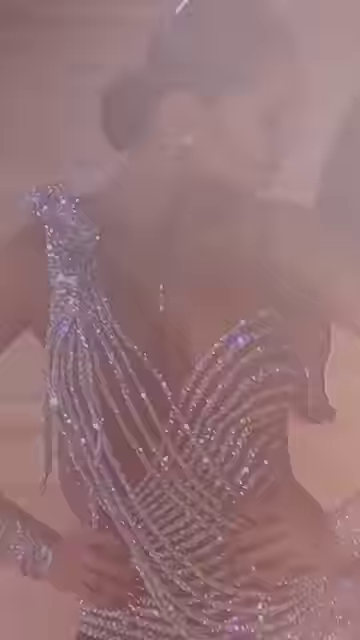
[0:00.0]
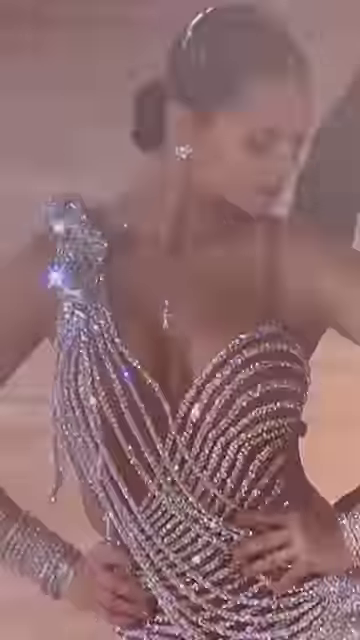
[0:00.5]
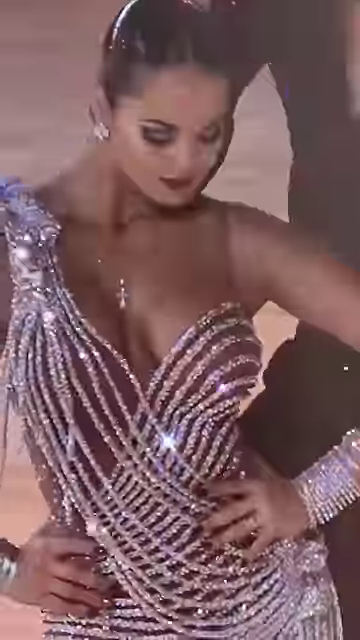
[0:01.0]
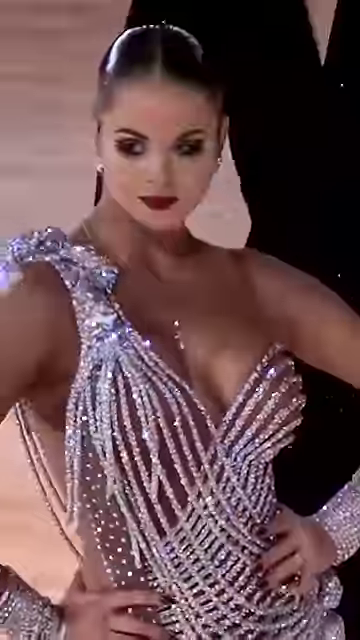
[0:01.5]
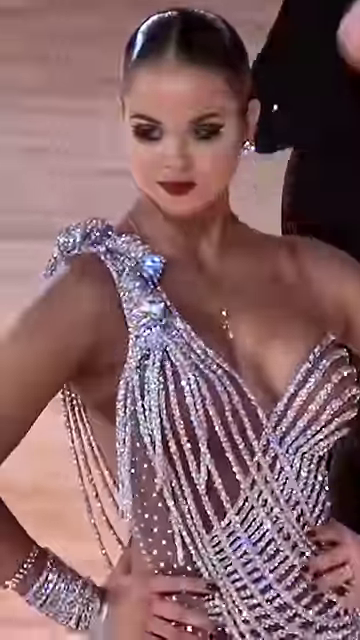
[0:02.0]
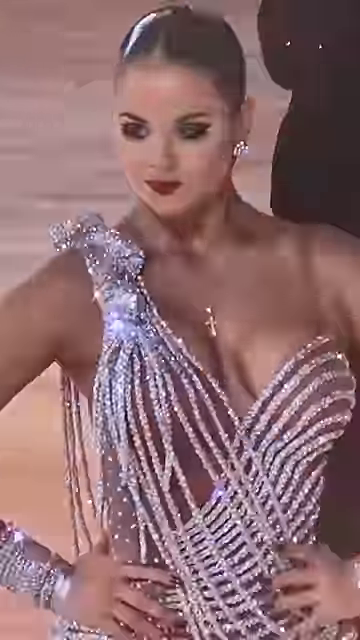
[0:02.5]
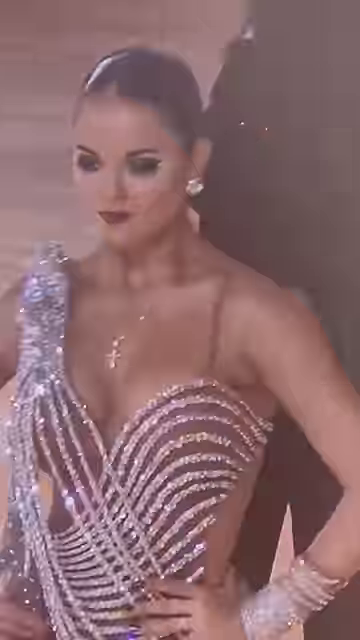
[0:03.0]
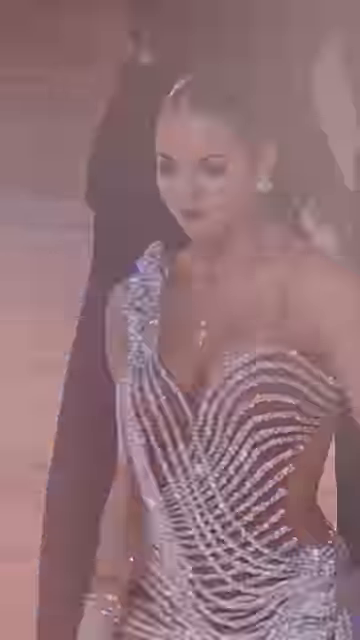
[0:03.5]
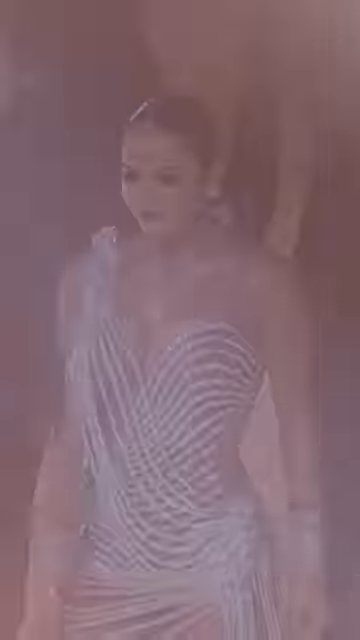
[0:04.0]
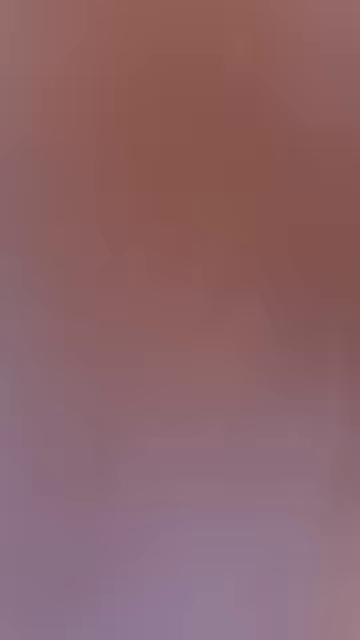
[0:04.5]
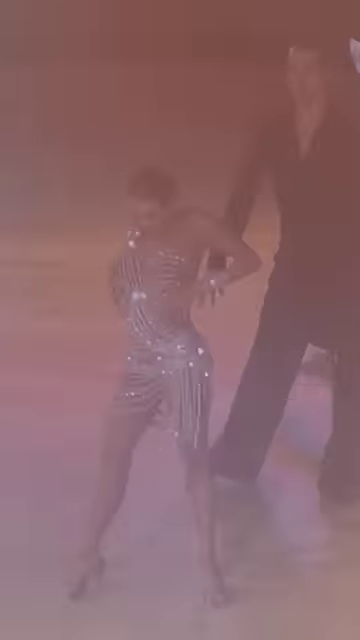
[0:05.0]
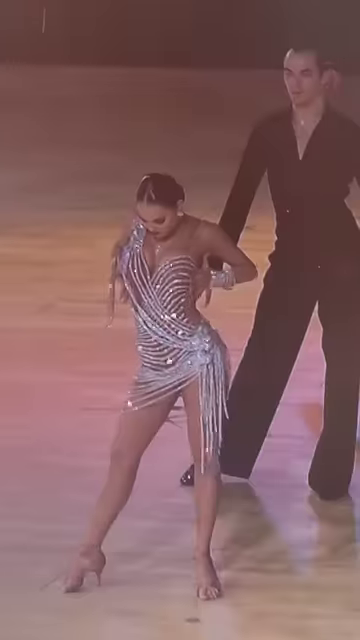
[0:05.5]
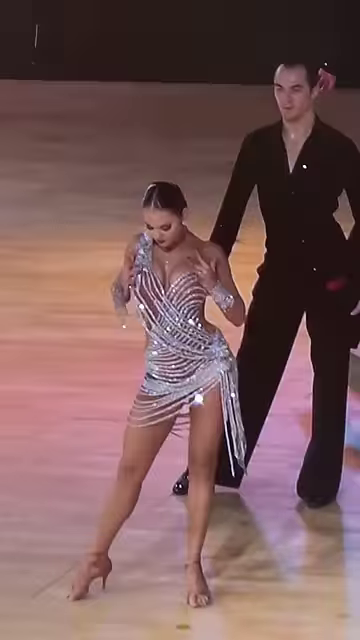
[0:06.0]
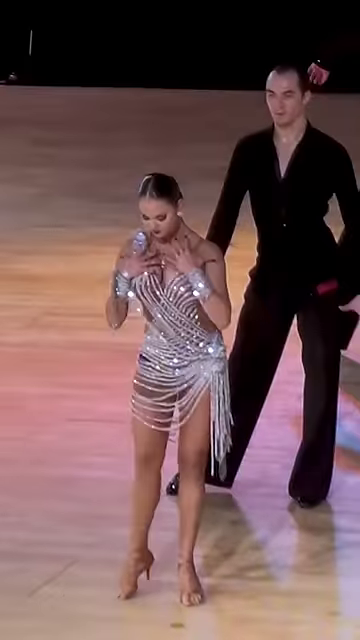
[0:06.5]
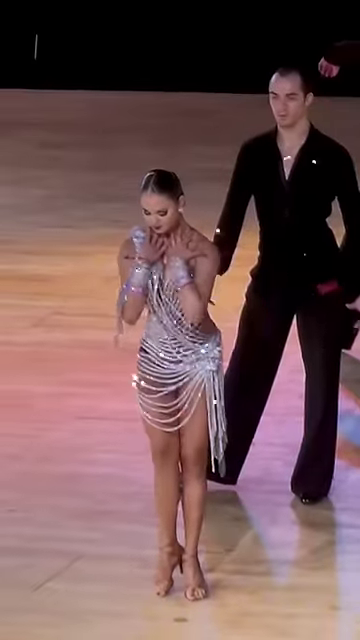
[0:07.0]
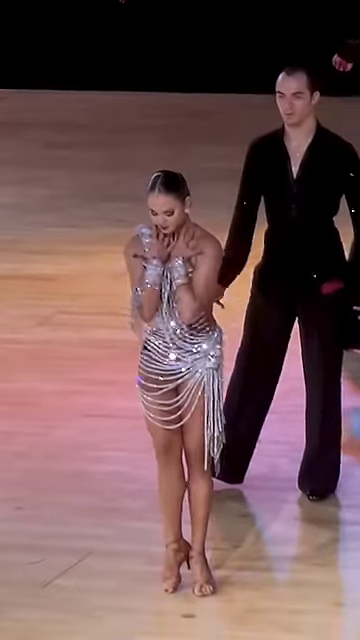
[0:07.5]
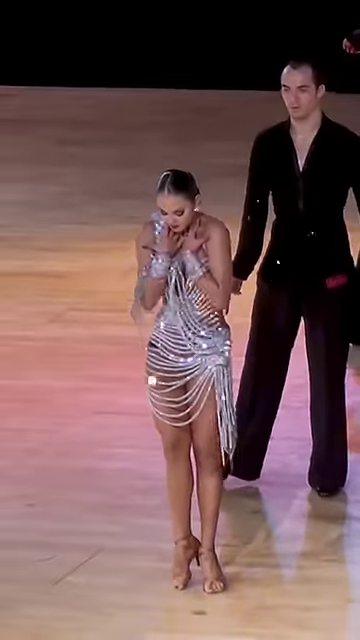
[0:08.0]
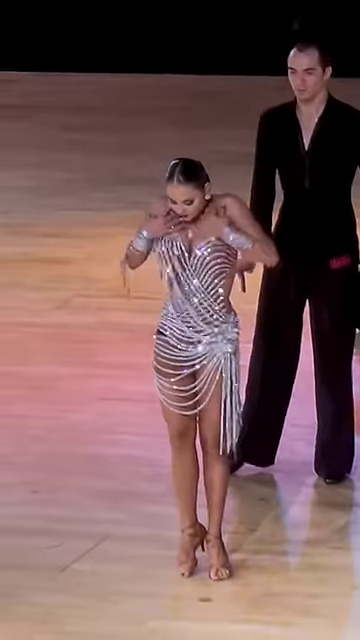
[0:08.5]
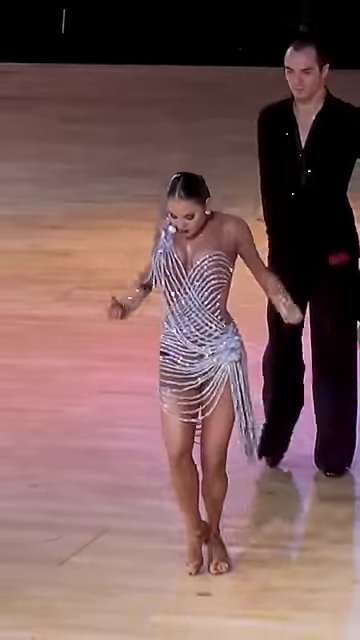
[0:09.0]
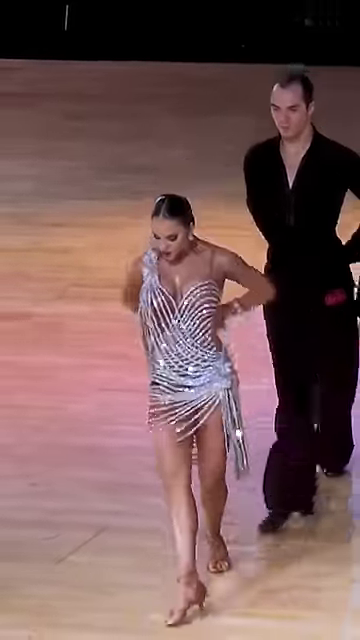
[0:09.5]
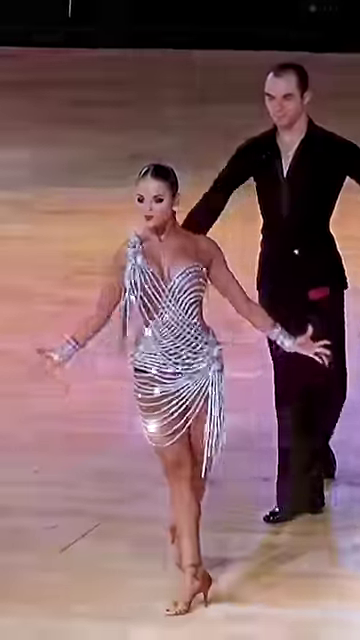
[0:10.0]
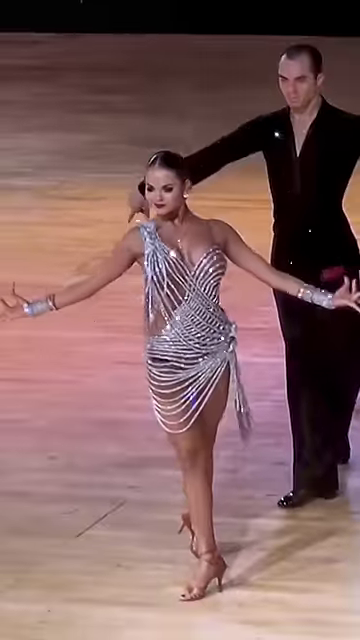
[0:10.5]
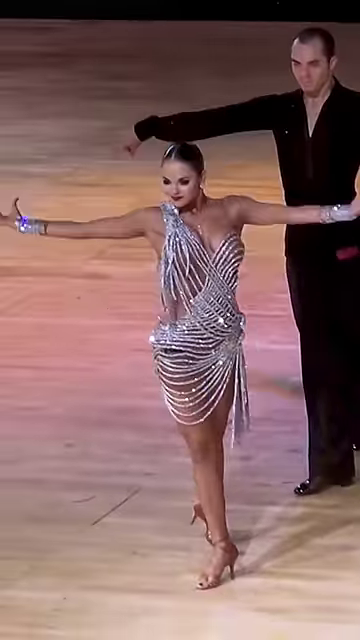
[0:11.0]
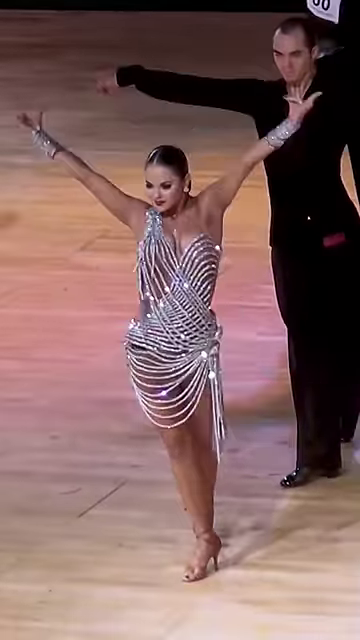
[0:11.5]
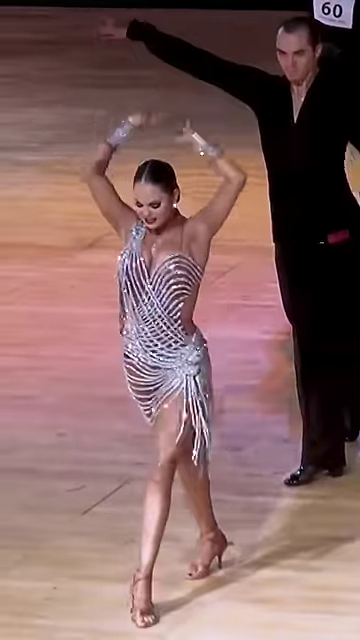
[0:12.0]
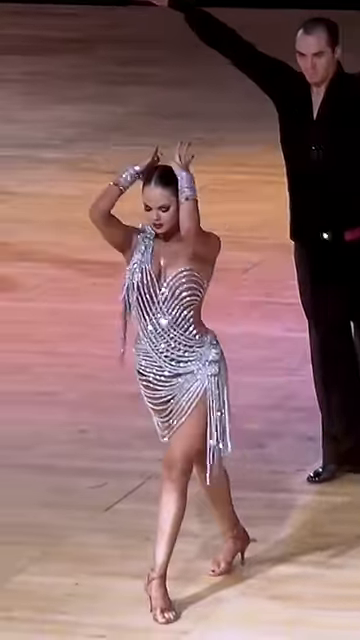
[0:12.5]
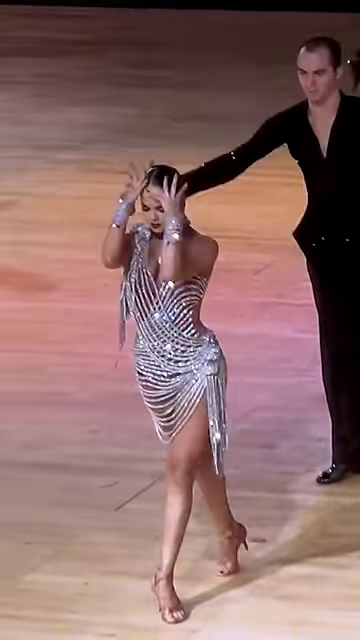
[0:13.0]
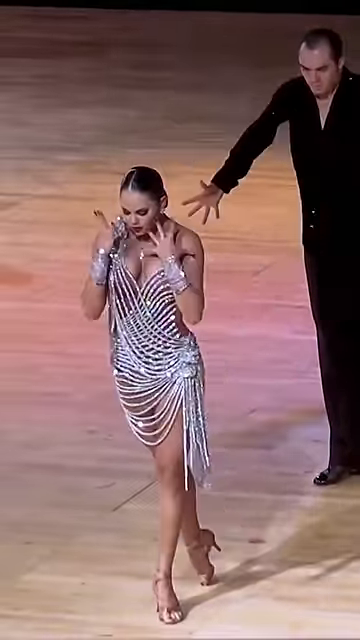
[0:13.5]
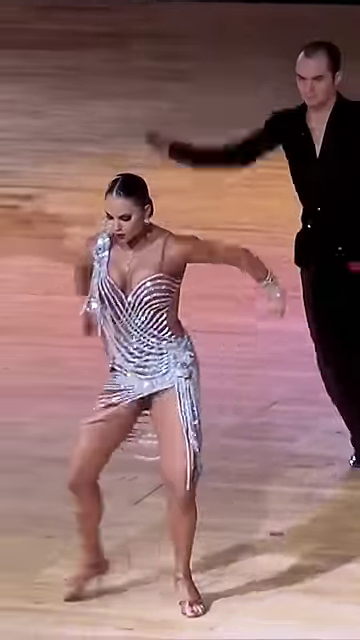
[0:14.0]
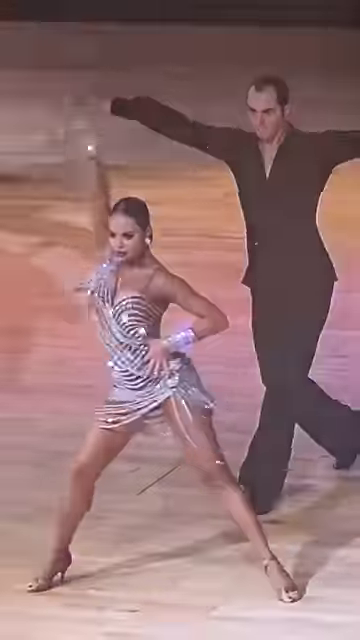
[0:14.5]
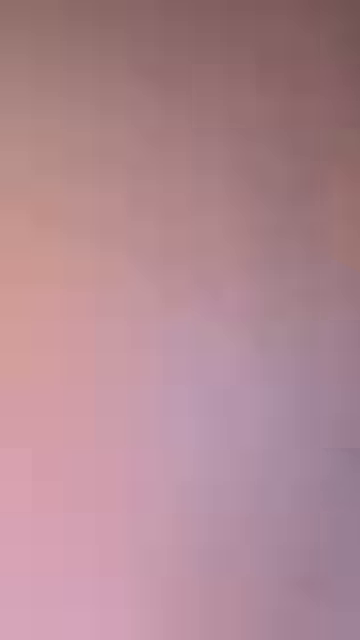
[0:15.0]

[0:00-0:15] A woman wears a glittery dress that shines like diamonds, along with heels, and appears to be dancing with a partner. The video is possibly meant to show off the dress. Her dance partner is behind her; he is a bald man wearing all black, and he seems to have a red handkerchief in his pocket. His suit is also glittery, though less so than her dress.